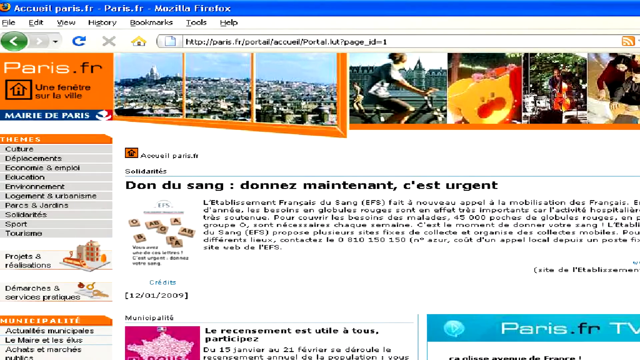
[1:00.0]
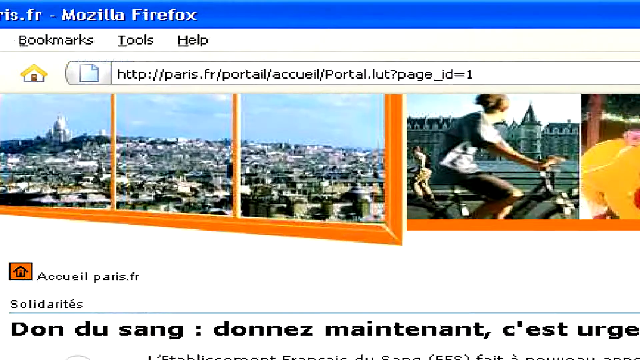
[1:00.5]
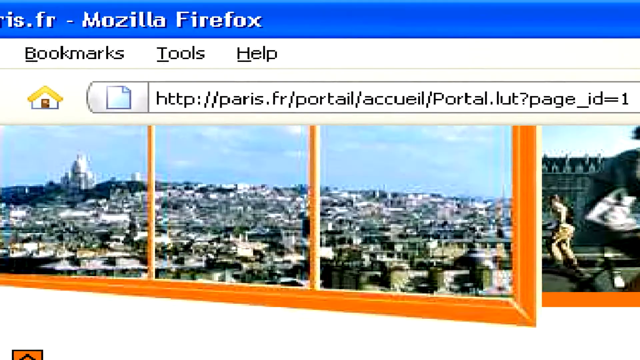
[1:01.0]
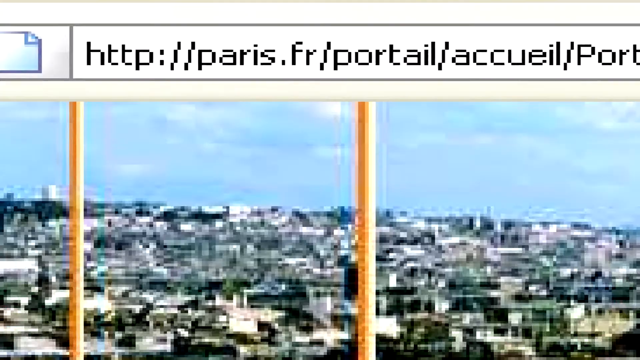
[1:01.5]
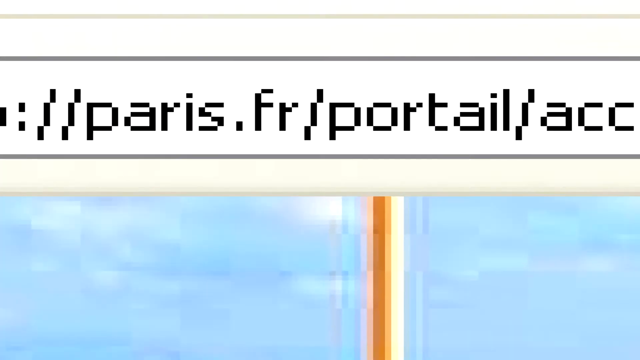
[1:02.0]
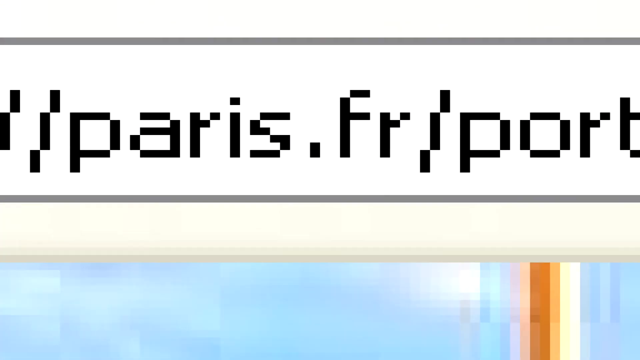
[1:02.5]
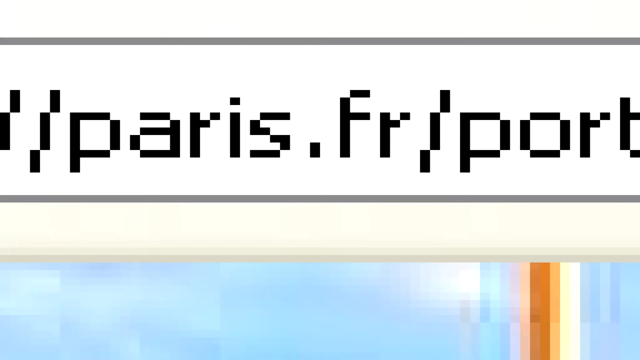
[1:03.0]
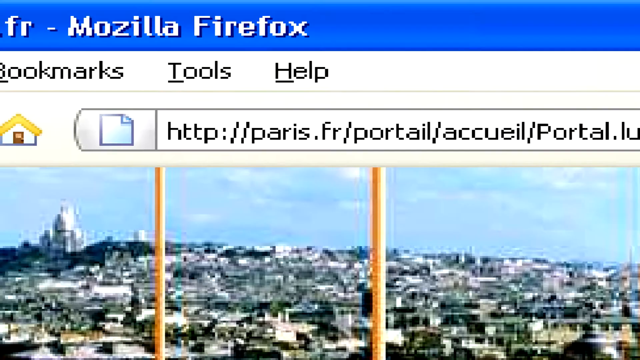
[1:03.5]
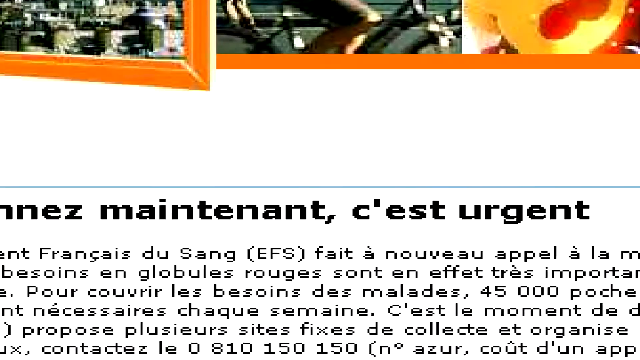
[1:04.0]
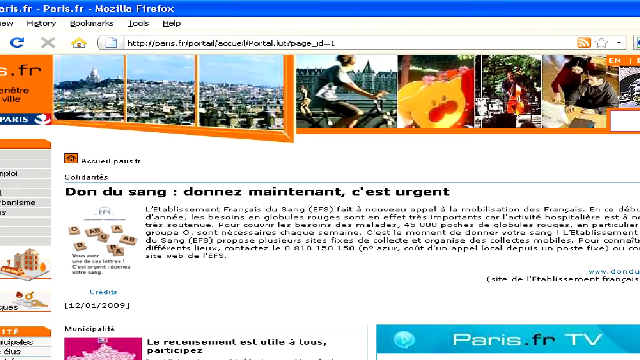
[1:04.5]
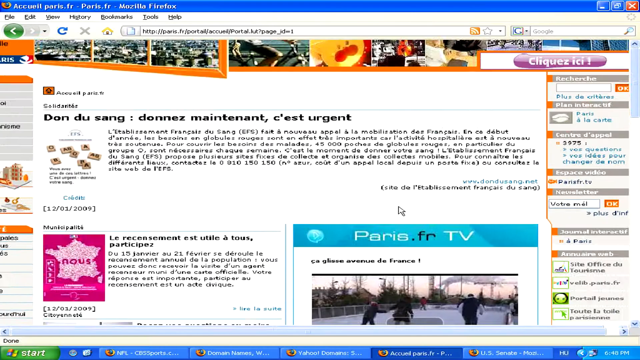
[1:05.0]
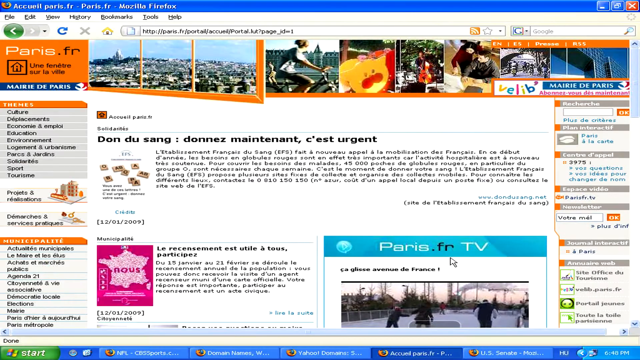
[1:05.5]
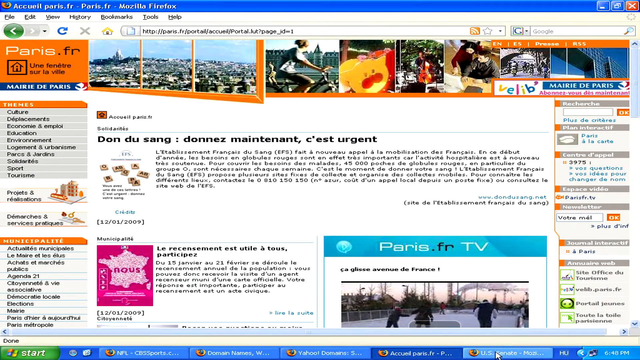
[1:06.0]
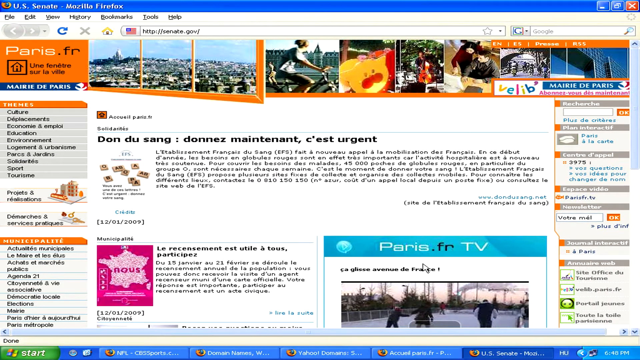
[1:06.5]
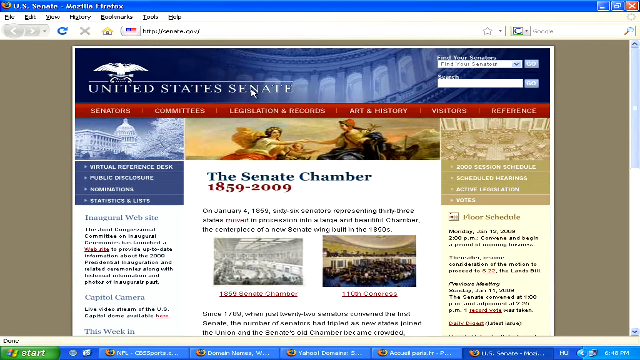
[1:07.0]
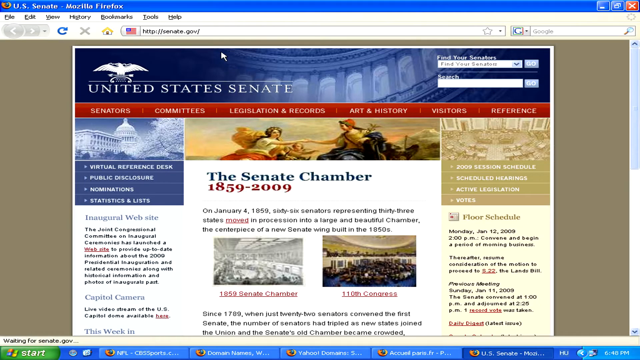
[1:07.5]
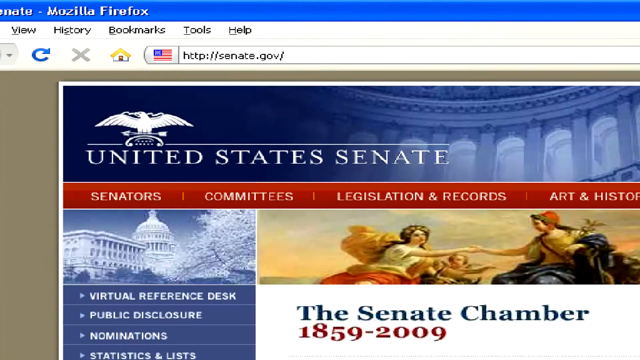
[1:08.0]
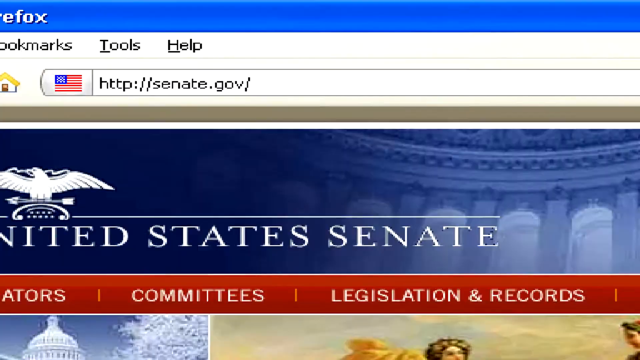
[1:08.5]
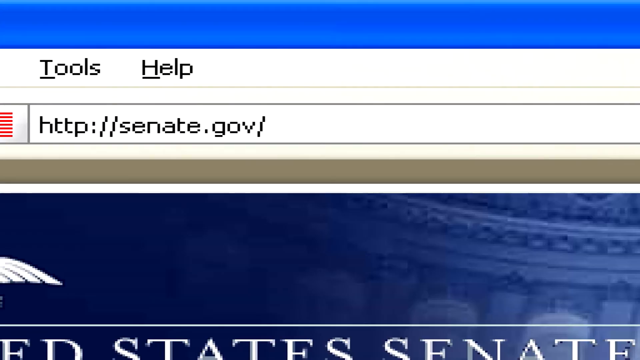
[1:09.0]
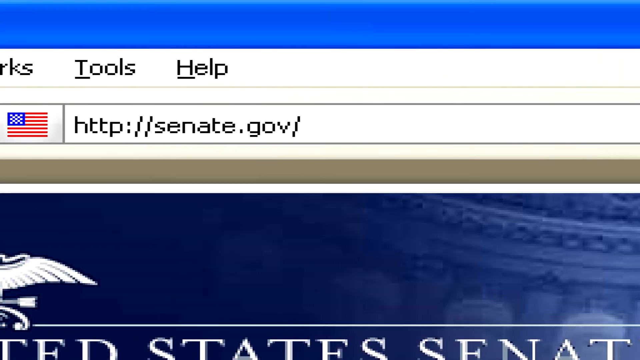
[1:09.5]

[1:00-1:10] The view zooms in on the web address again. Above it are the menu items bookmarks, tools and help, each with its initial letter underlined. To the left of the web address is a small icon like a page with a folded-over corner, and there is a home button with a yellow rooftop and a white house. He zooms in extremely far on paris.fr, and the lettering becomes very blocky, almost like Minecraft lettering; the top line of the S does not go all the way across, and parts of each letter are spaced out. He then zooms out again quite radically. He clicks on something at the bottom that cannot be made out, which leads to the senate.gov page. It has a red banner with links including senators and committees, and underneath are red hyperlinks including session schedule, hearings, legislation and votes. He zooms in on senate.gov as well.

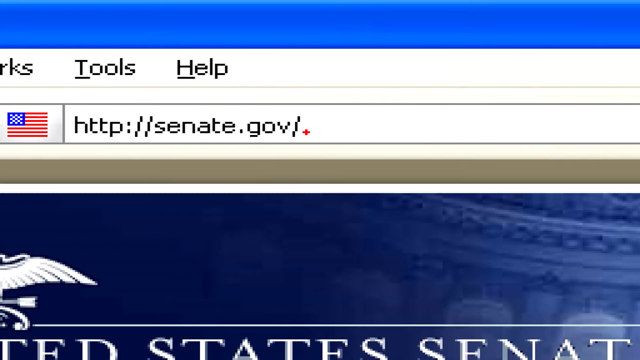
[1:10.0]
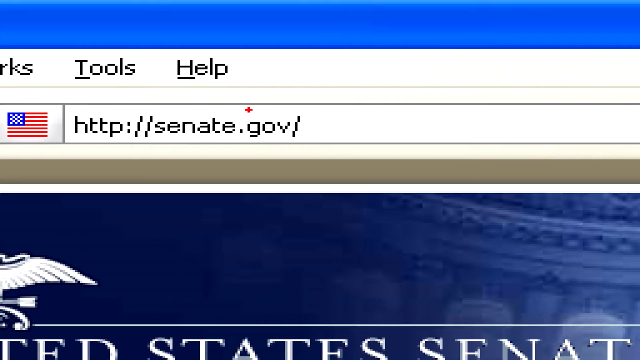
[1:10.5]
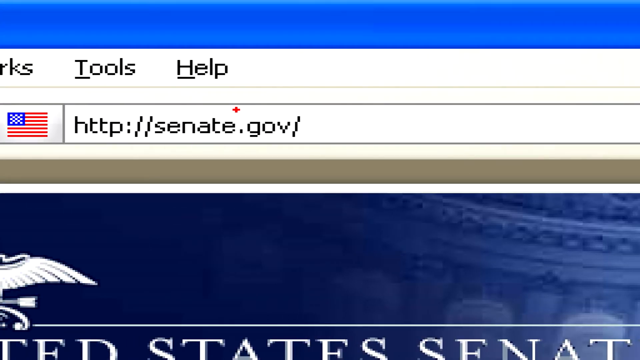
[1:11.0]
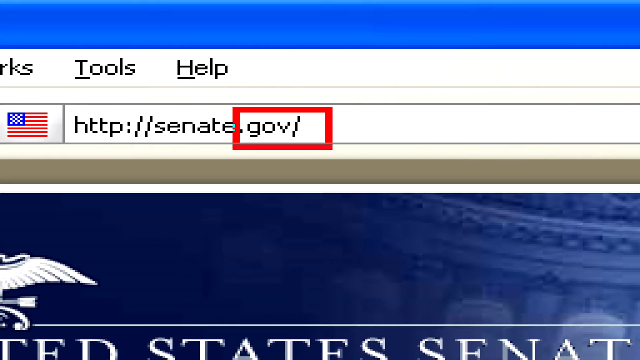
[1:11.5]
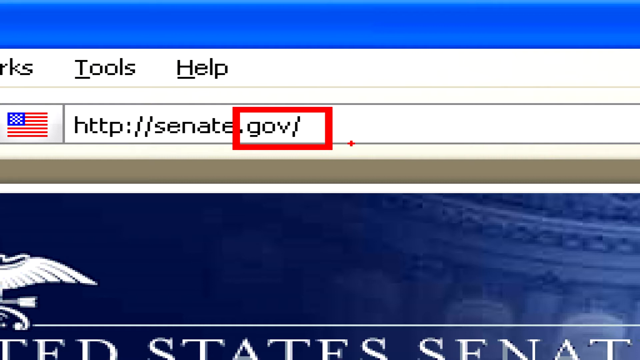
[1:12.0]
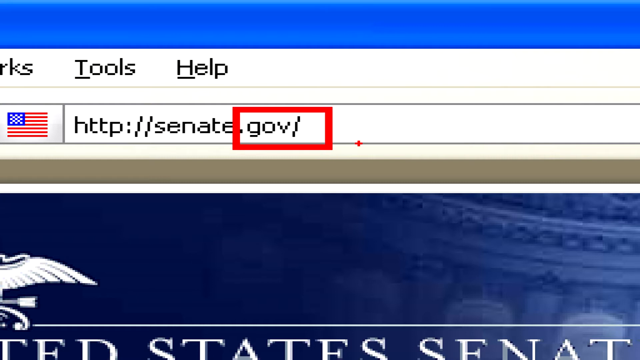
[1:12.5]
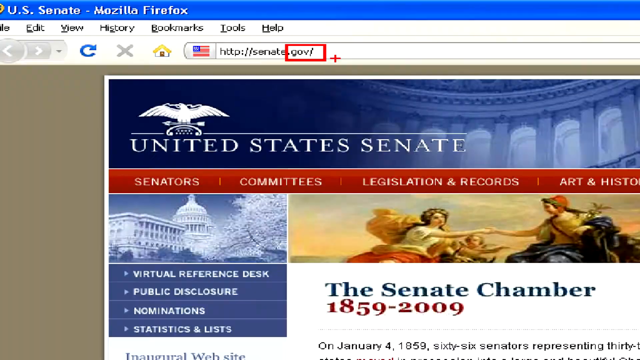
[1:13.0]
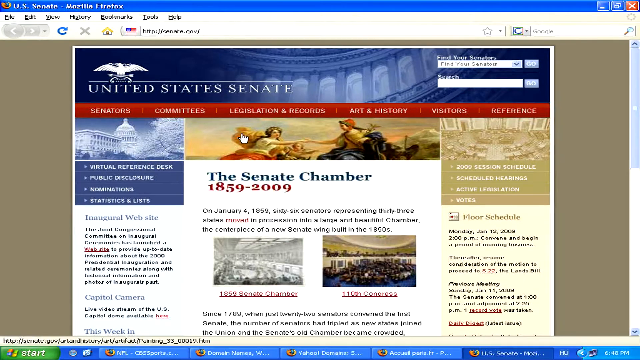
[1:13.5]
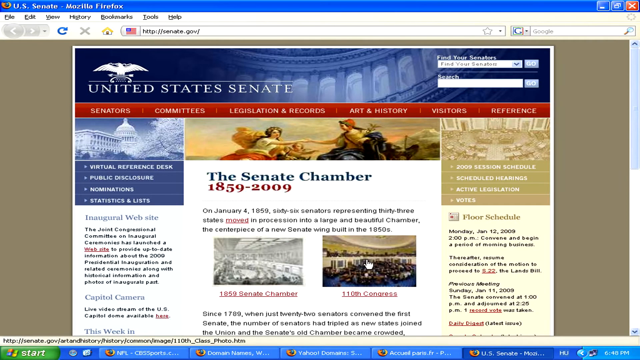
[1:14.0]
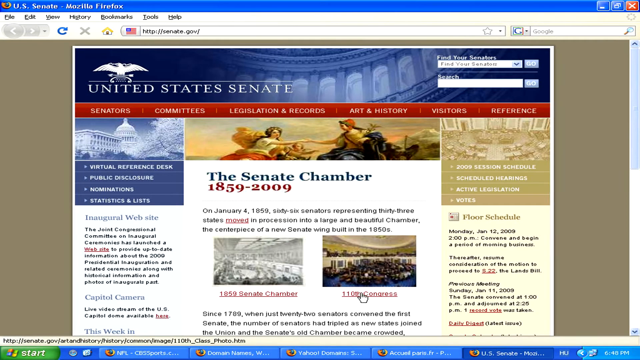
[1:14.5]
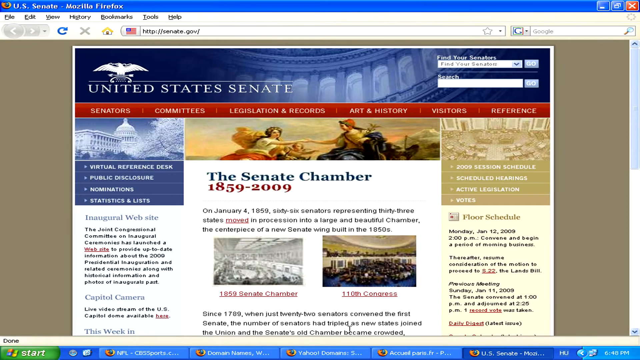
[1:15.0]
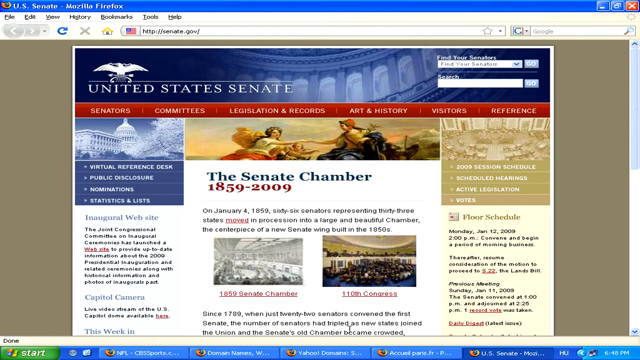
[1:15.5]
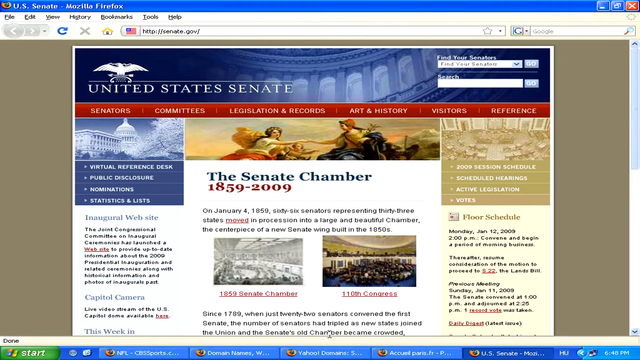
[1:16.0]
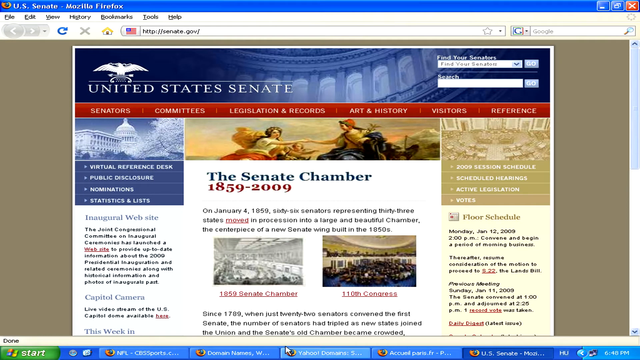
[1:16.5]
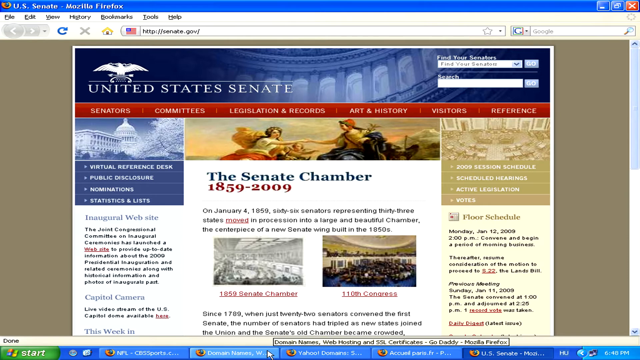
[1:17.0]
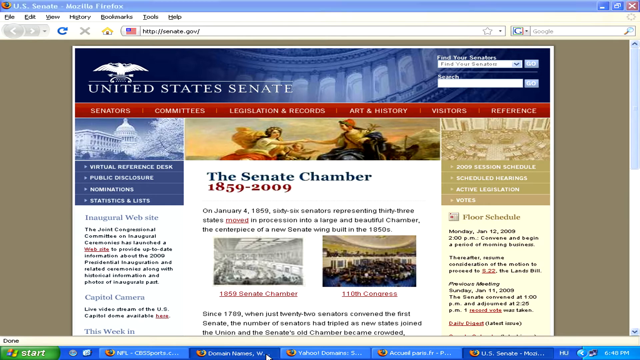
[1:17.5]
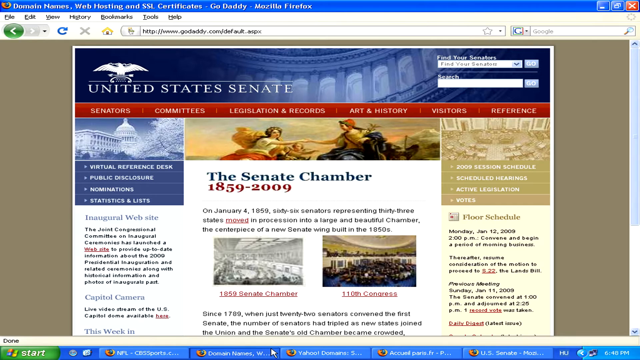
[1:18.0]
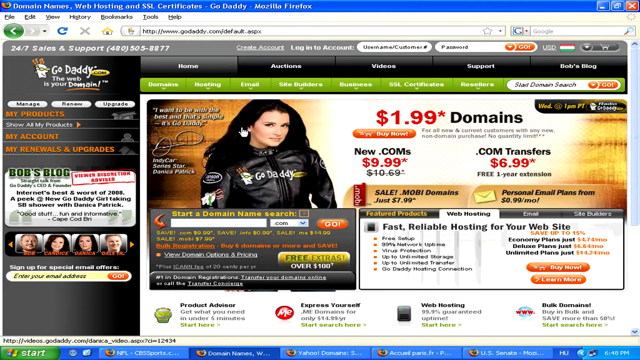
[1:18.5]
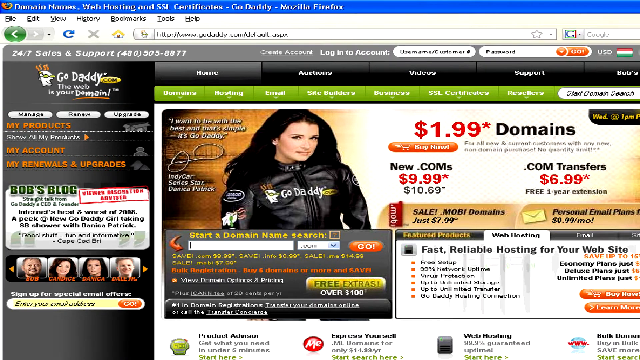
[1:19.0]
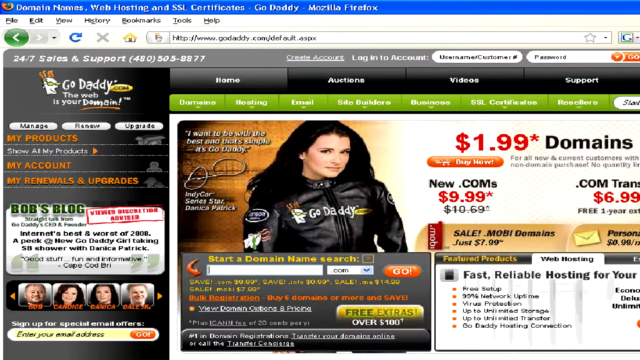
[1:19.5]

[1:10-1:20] At this web address the pointer is a red plus with no arrow. To the left of the URL is an icon that looks like a United States flag, but instead of white stars it has what look like little checkers of alternating blue and white squares, along with red and white horizontal stripes. He clicks and drags a red border around just the "gov" part, then zooms out. He appears to be looking at text reading "since 1769" that partly blocks the text underneath. There are two images: an old black-and-white photo of 1859 and a full-color one of the 110 Congress. He then clicks something that leads to GoDaddy, showing Danica Patrick, a NASCAR driver, wearing a zip-up leather jacket with "go daddy" on the front. There is pricing related to domains, including a 99 figure, and a button underneath.